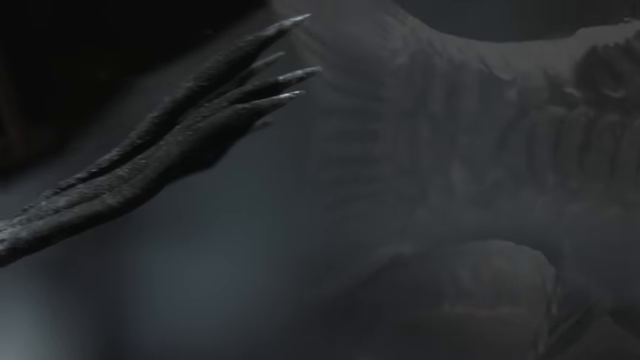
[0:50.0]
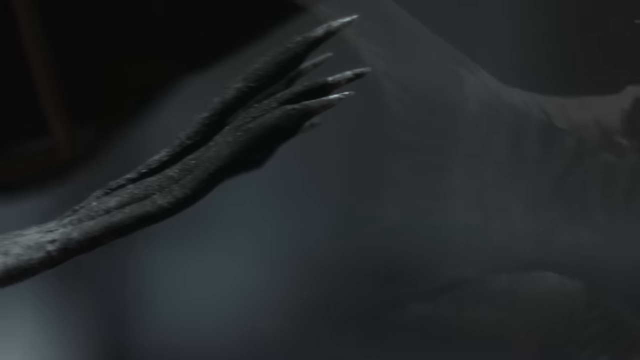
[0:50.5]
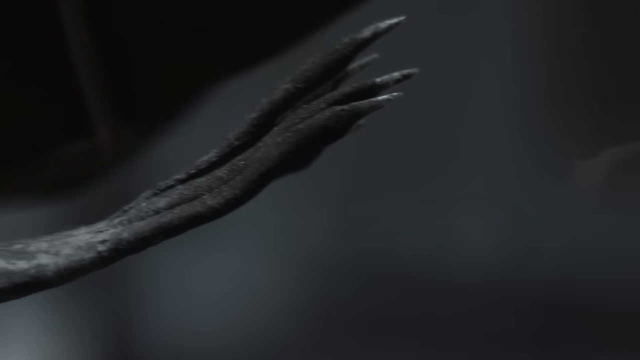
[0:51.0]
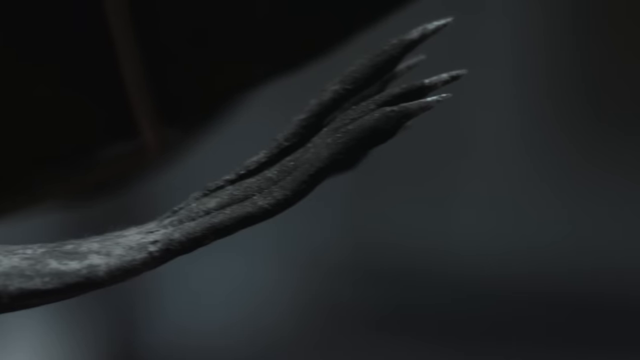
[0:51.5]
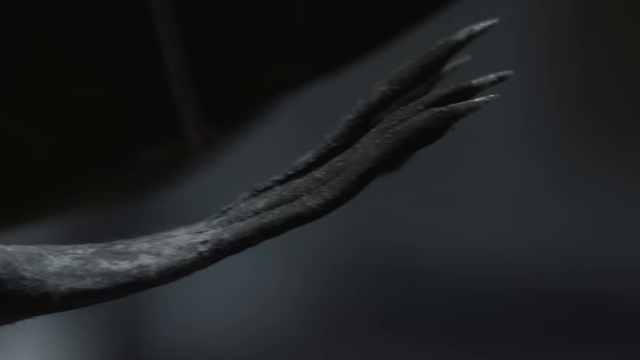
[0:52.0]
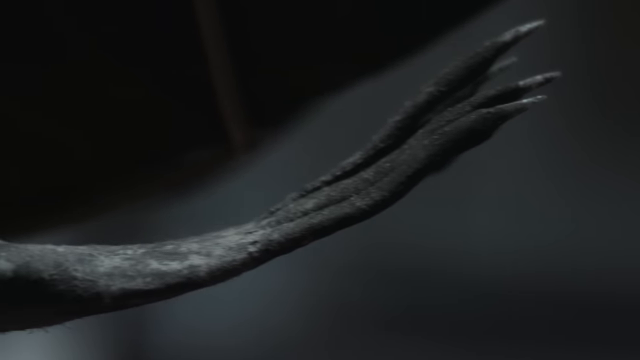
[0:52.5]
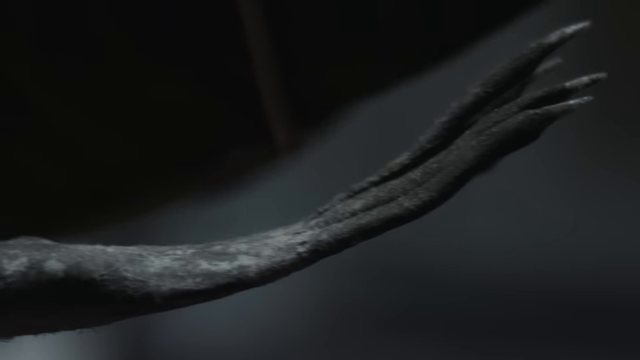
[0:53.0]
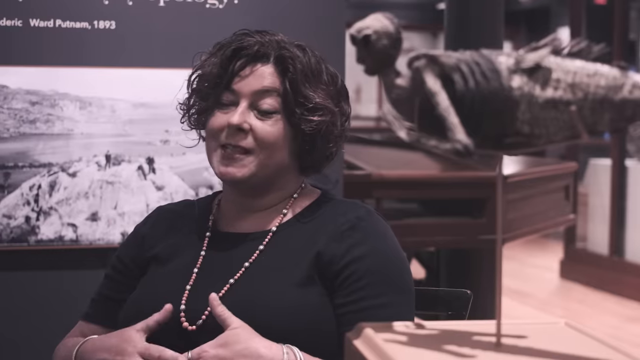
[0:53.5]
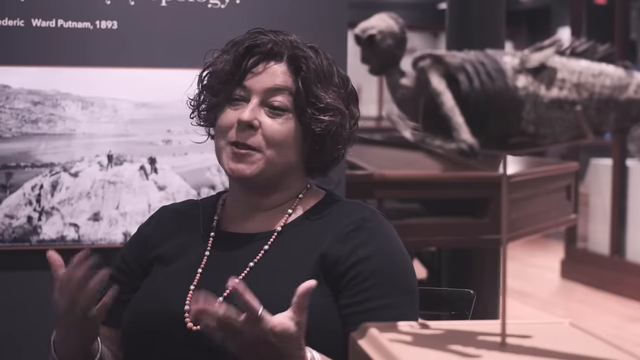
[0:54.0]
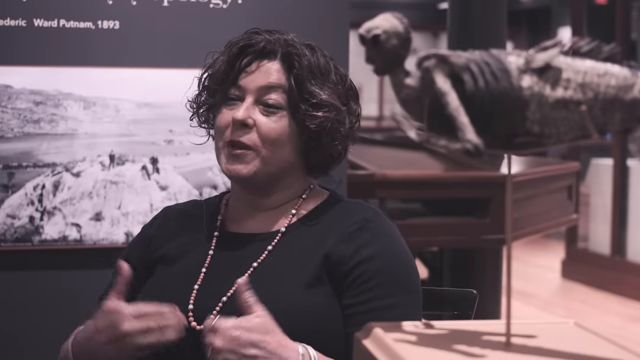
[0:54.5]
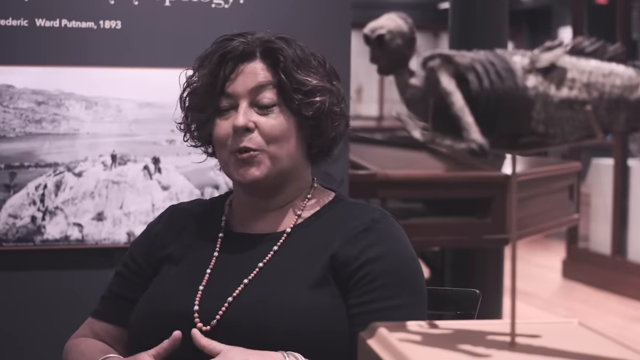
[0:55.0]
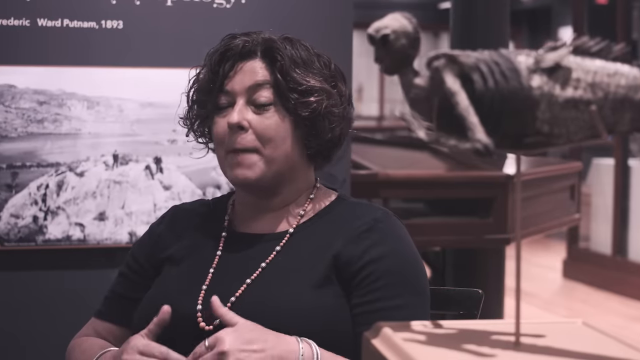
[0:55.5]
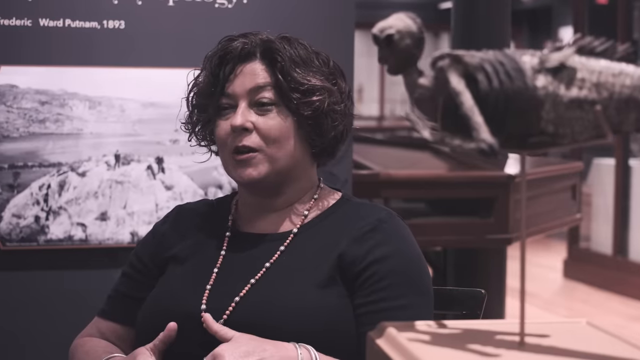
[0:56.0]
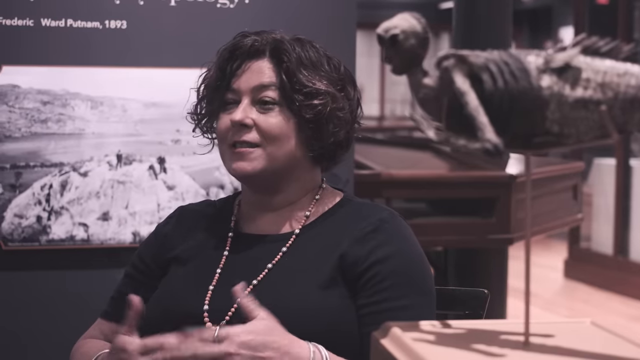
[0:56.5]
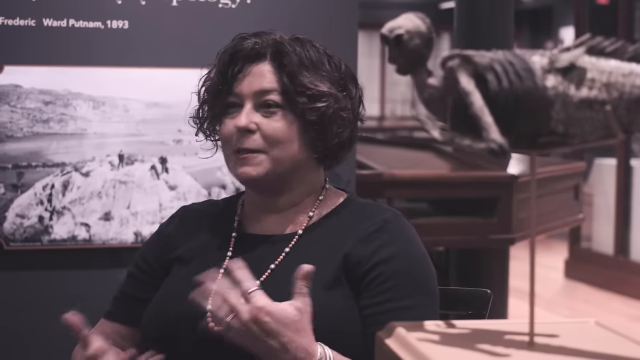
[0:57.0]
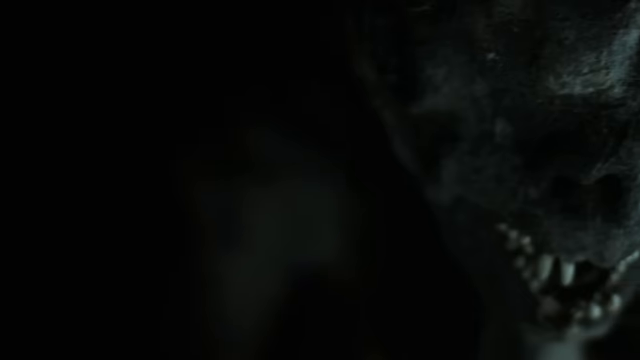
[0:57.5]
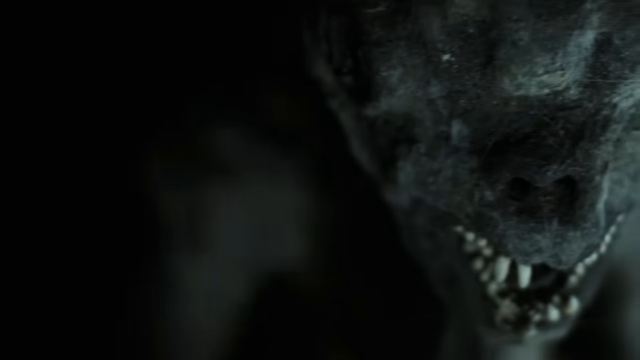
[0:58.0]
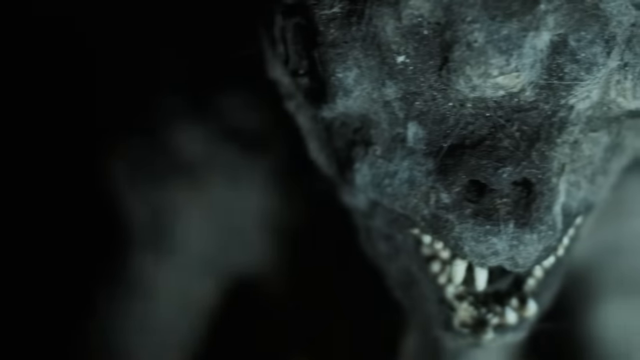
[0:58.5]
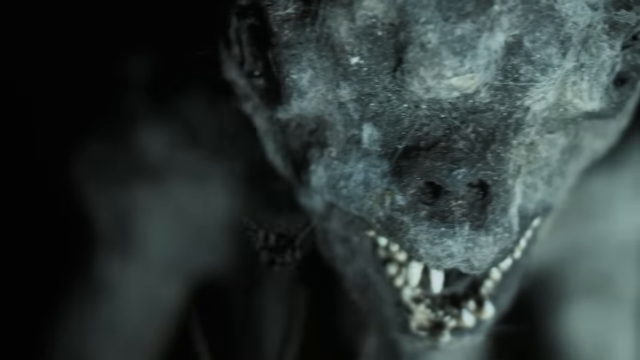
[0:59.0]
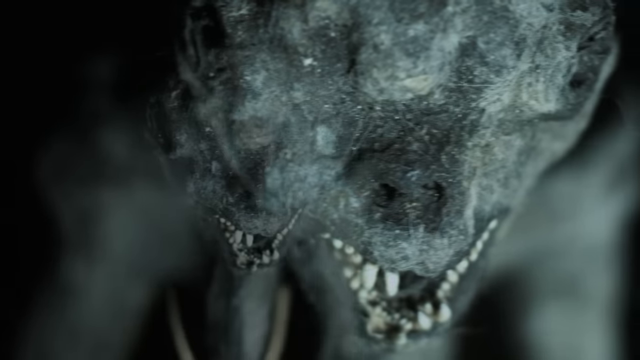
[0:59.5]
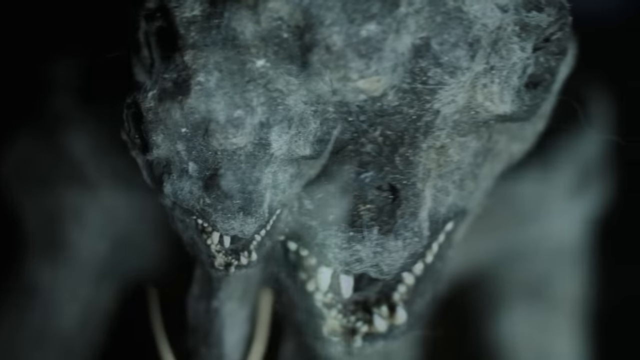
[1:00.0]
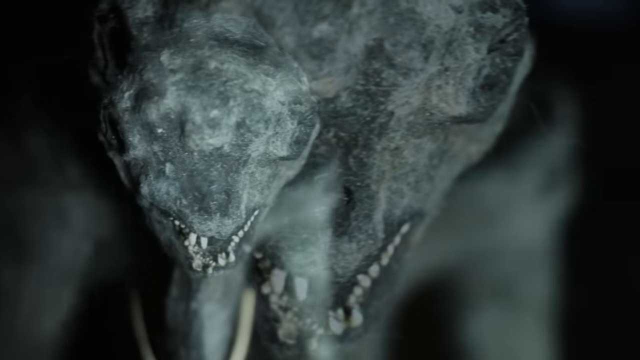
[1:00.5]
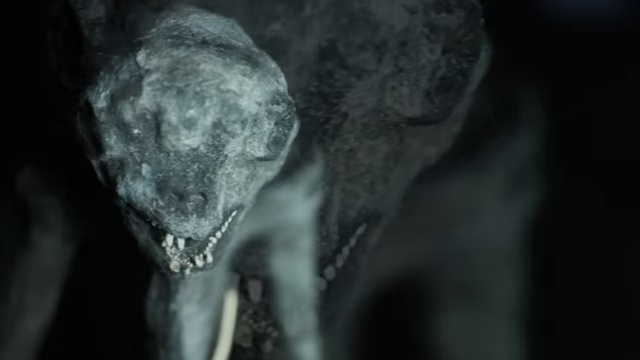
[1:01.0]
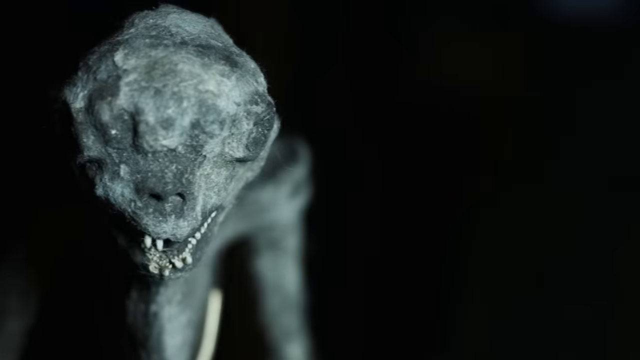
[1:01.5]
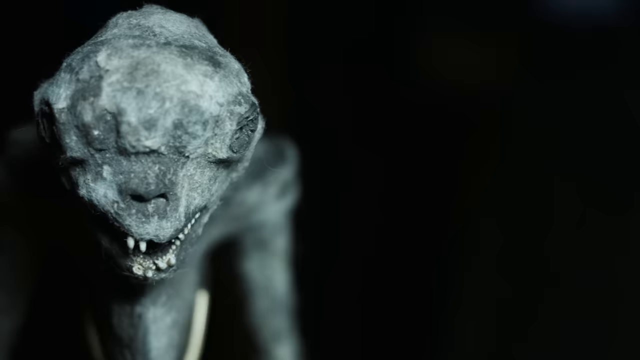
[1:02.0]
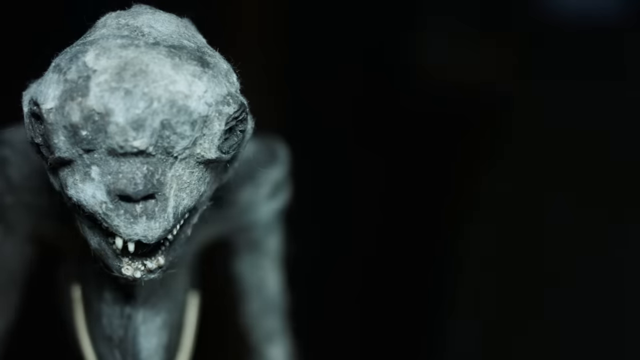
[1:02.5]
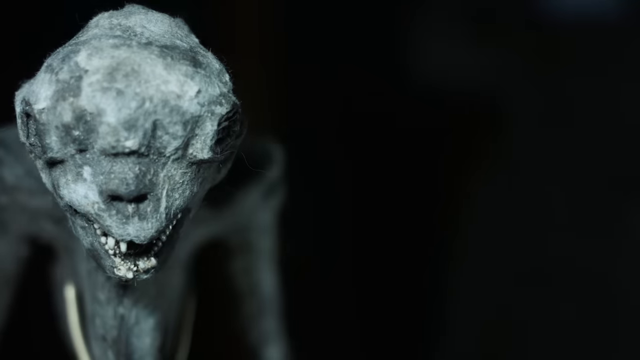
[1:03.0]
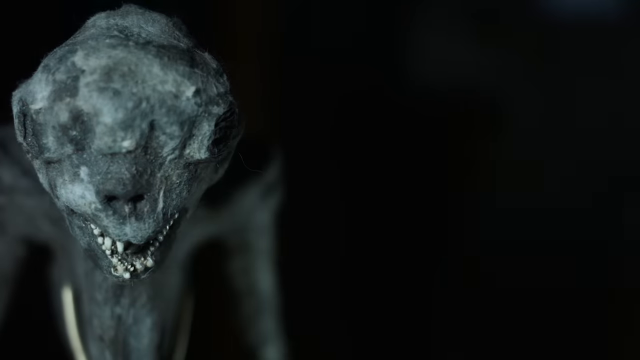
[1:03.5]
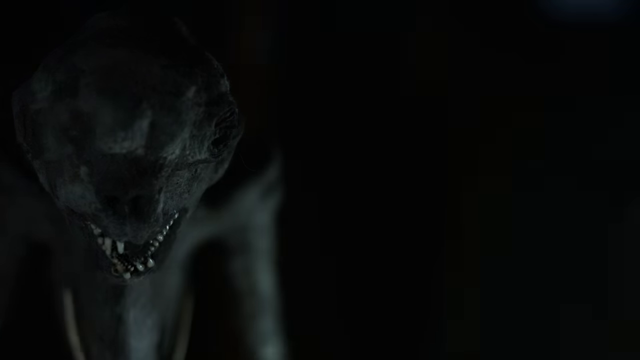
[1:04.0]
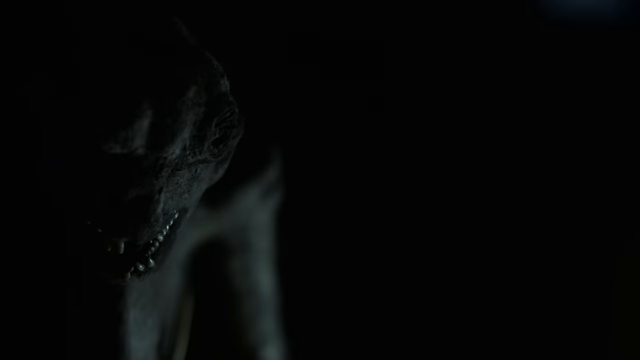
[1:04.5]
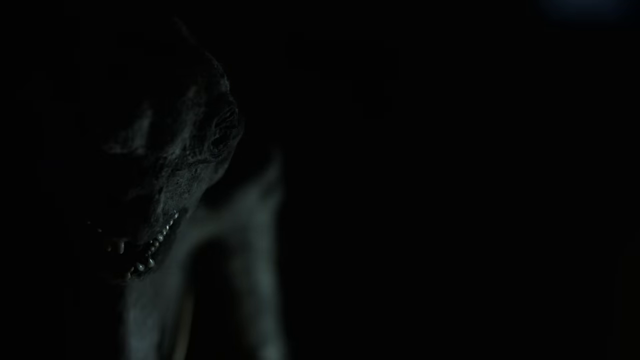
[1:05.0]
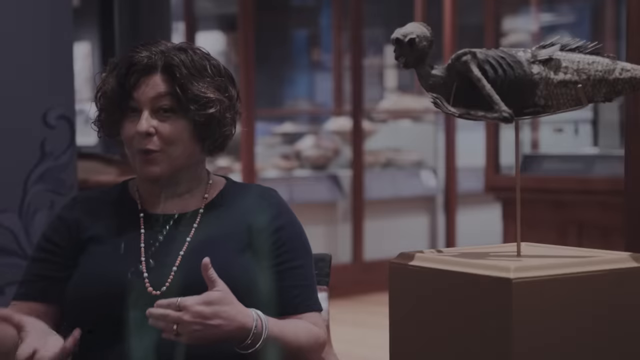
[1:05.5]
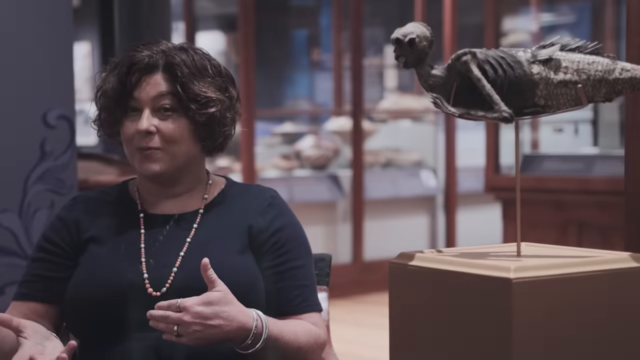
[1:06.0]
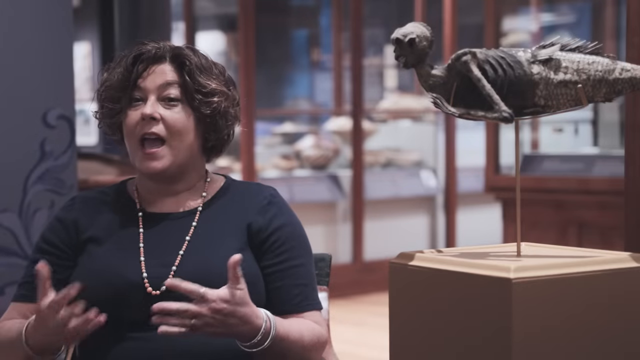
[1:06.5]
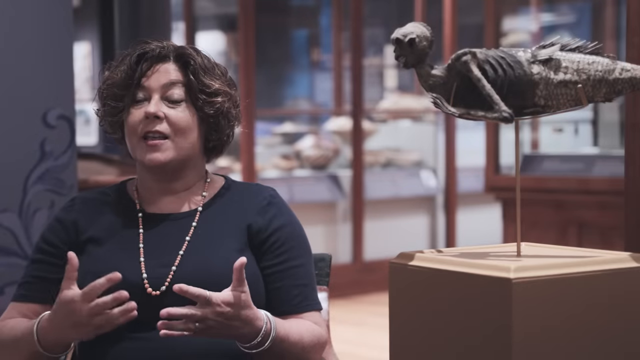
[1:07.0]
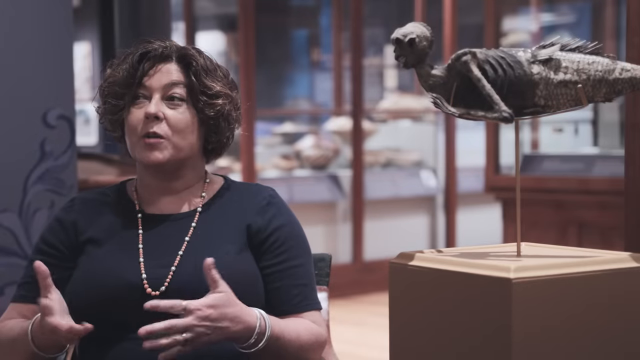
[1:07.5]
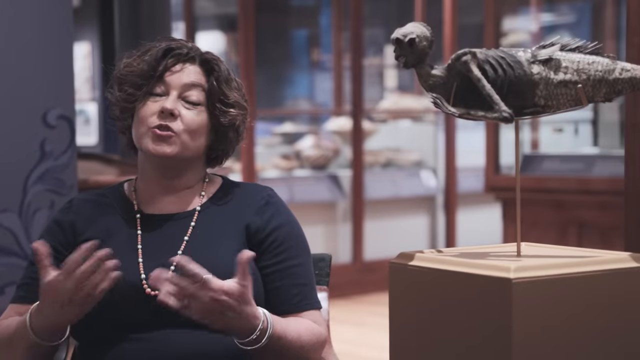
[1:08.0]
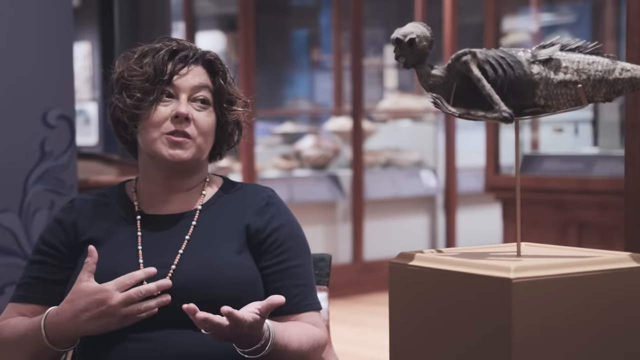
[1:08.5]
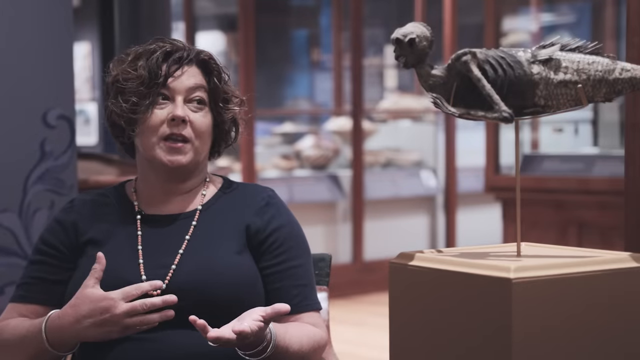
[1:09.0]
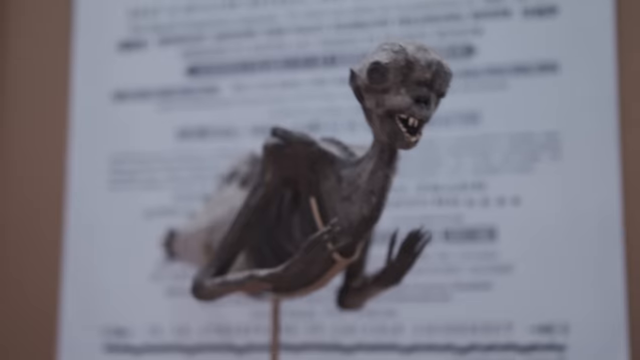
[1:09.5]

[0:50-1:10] Against a dark gray screen, the creature extends diagonally from the left side, showing what may be hands or paws. It has something like the head of a monkey, the arm of a human, claws of some animal, and a fishtail. The claws resemble skinny cat claws with pointy nails, shaped like coffin-style manicured nails. The camera then slowly turns toward the left and shows the woman again. She has short, wavy brown hair in a bob, wears a bead necklace, and her top is black, though it is unclear whether it is a dress or a shirt. Then the creature is shown with what is either a snout or a nose. Behind it is a white board, but it is blurry and its words cannot be read.